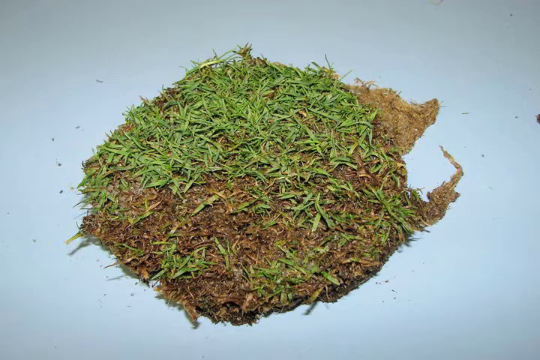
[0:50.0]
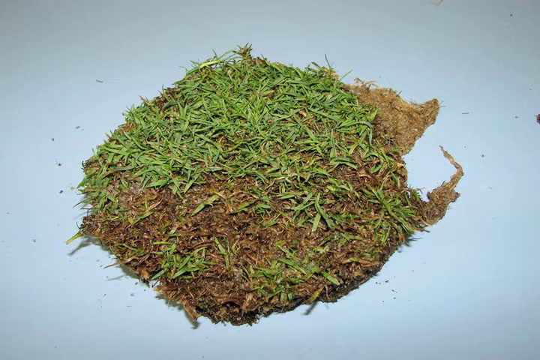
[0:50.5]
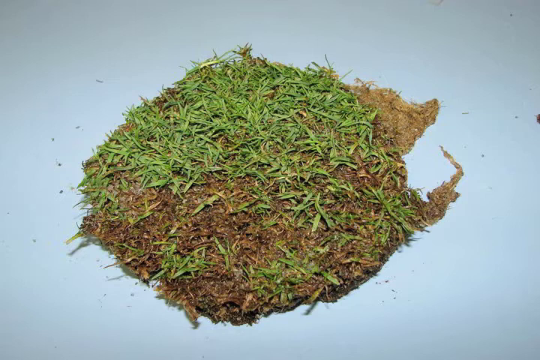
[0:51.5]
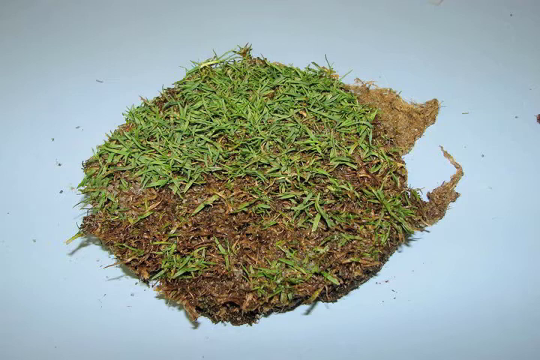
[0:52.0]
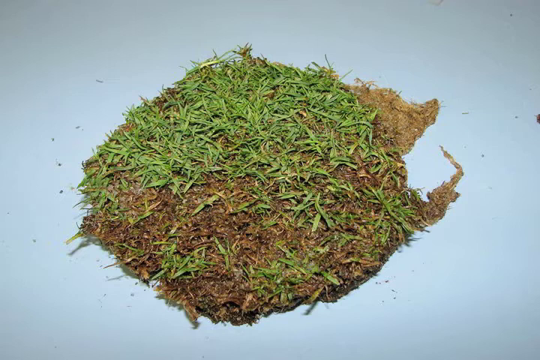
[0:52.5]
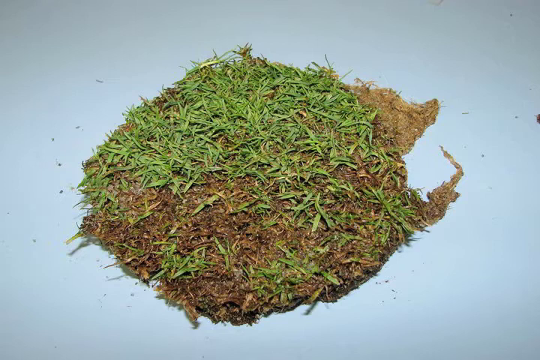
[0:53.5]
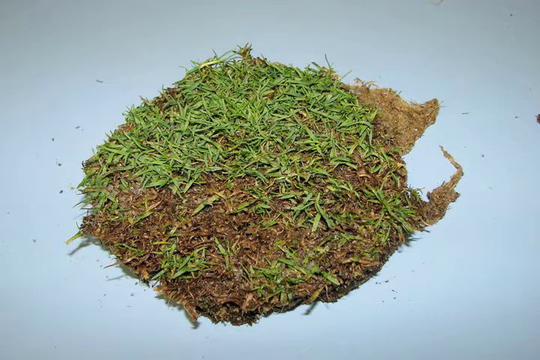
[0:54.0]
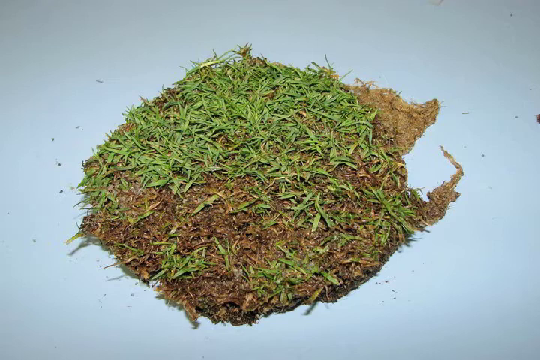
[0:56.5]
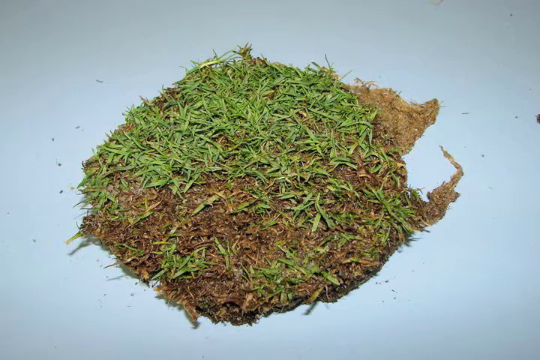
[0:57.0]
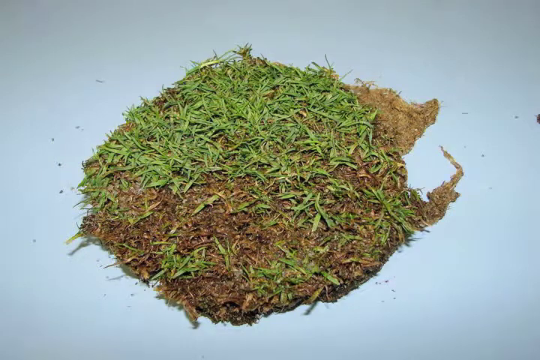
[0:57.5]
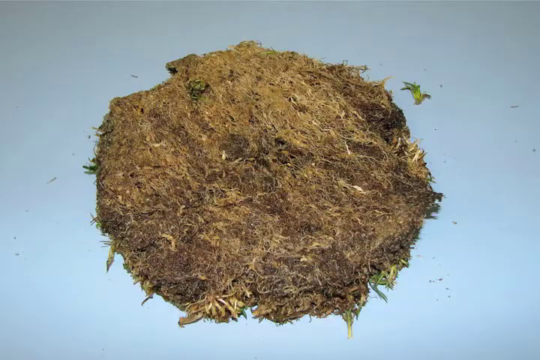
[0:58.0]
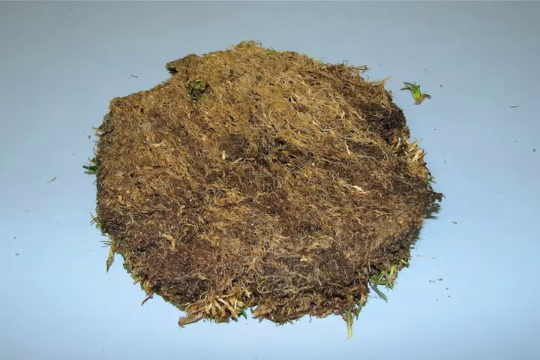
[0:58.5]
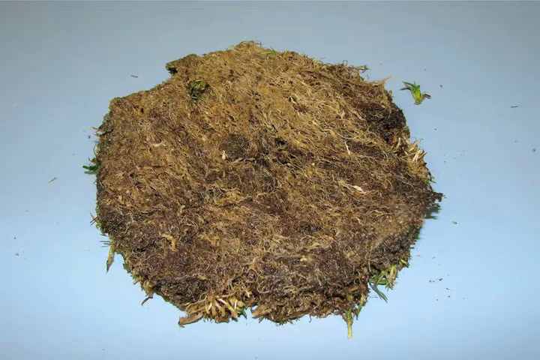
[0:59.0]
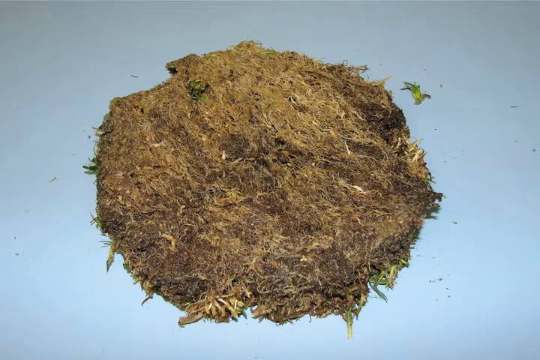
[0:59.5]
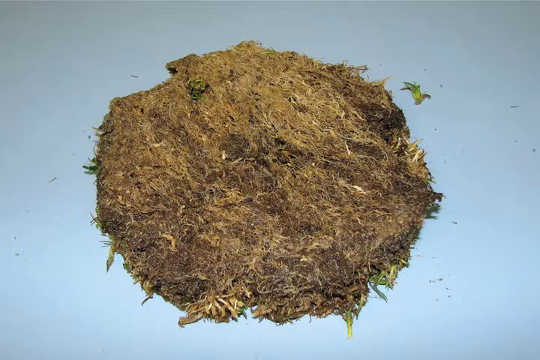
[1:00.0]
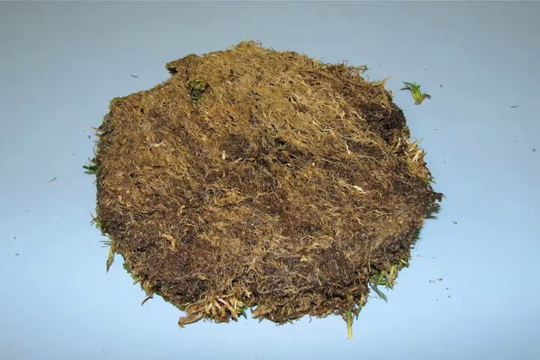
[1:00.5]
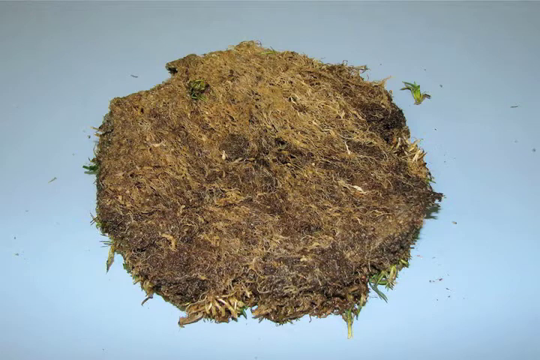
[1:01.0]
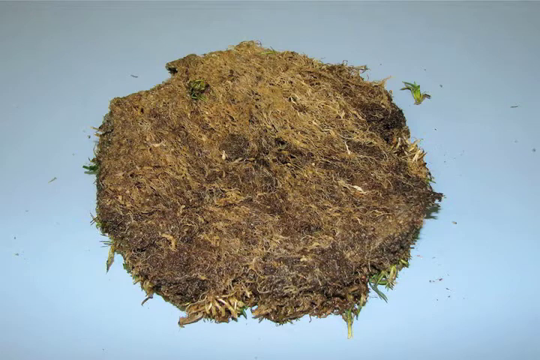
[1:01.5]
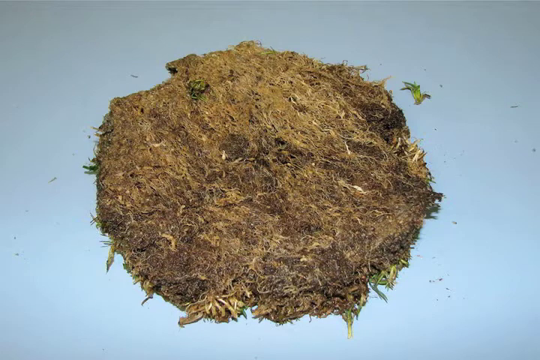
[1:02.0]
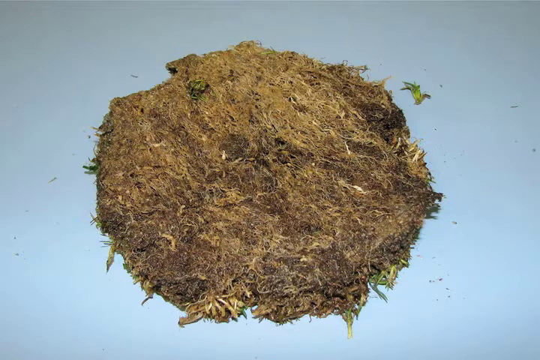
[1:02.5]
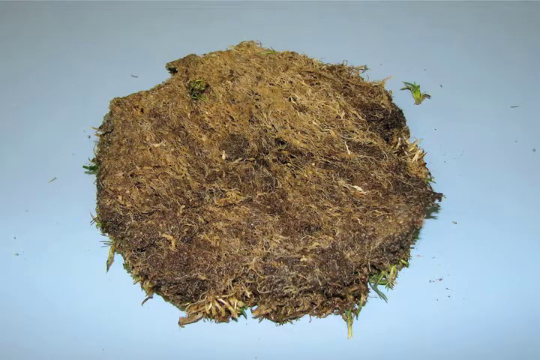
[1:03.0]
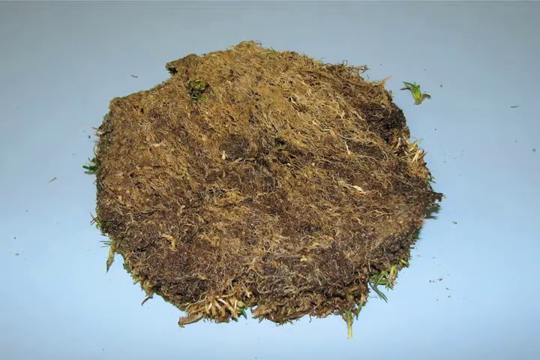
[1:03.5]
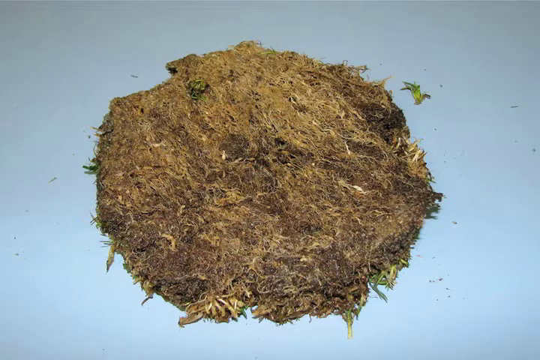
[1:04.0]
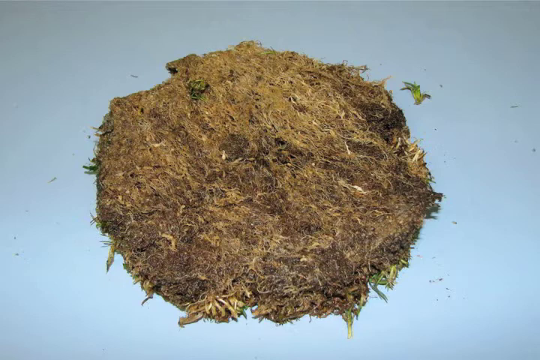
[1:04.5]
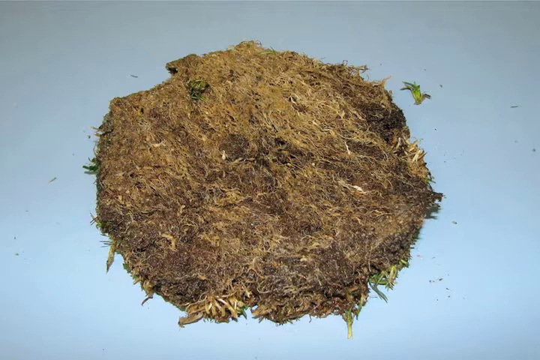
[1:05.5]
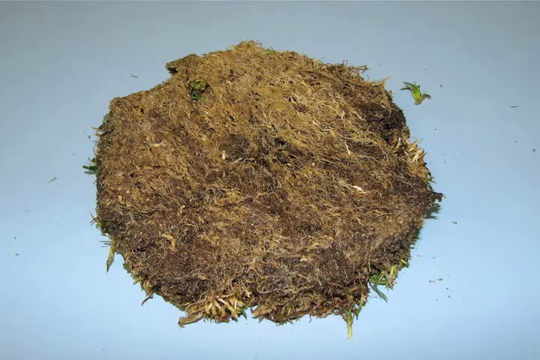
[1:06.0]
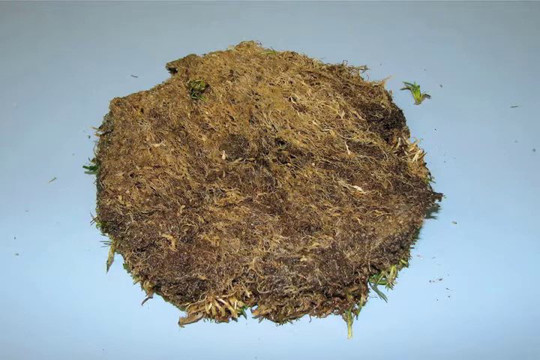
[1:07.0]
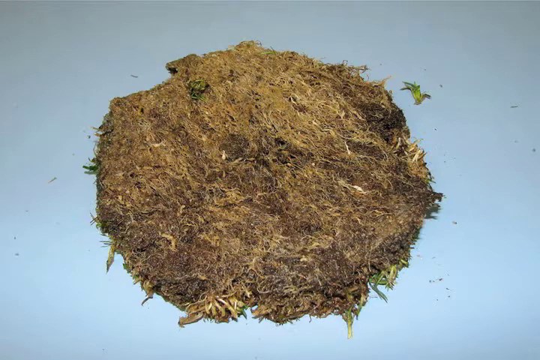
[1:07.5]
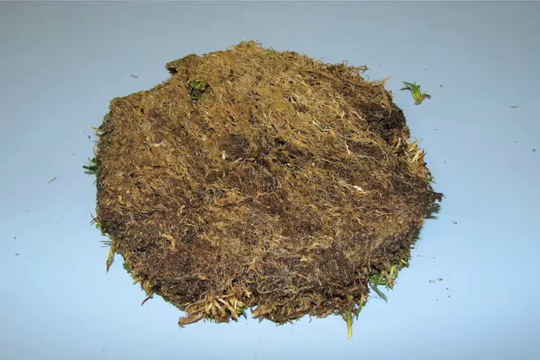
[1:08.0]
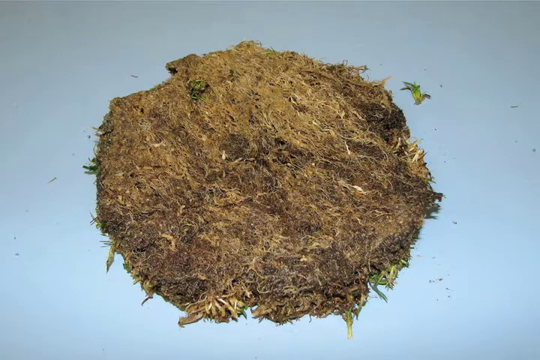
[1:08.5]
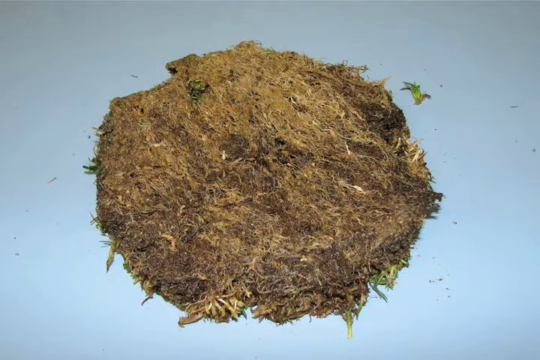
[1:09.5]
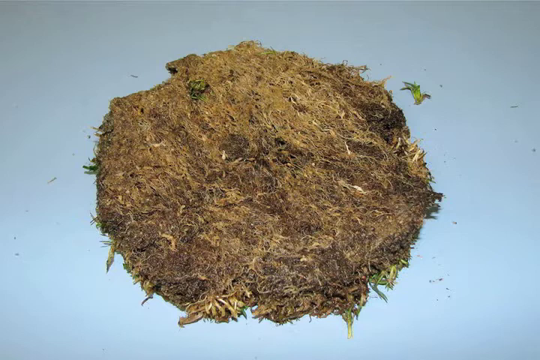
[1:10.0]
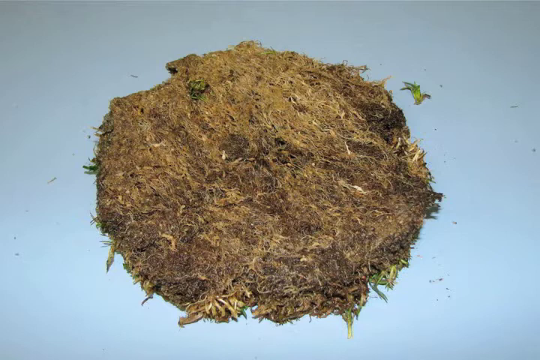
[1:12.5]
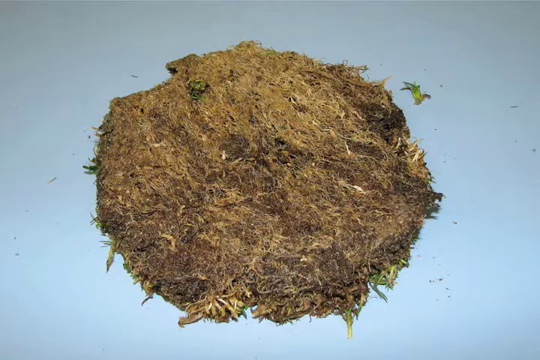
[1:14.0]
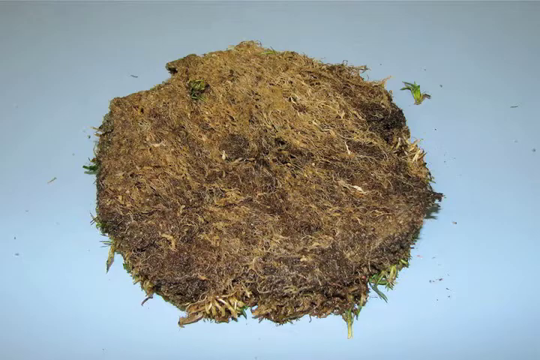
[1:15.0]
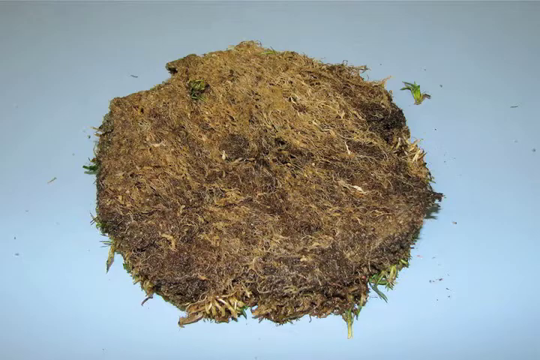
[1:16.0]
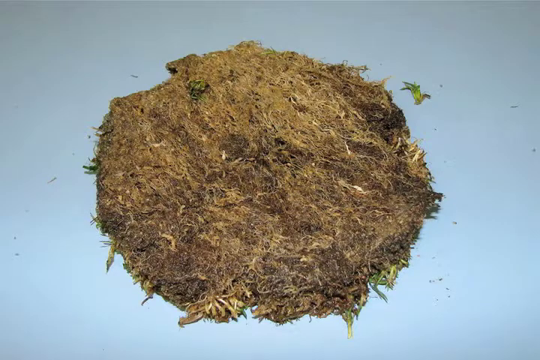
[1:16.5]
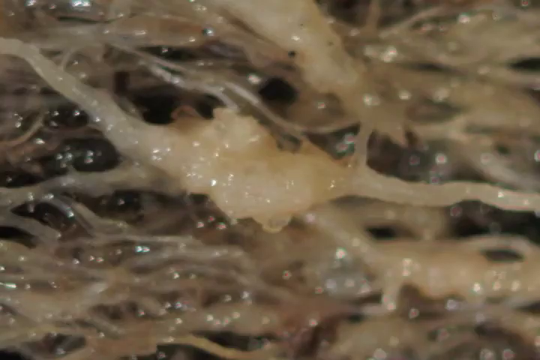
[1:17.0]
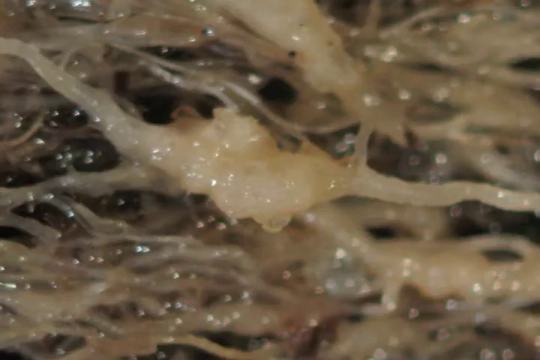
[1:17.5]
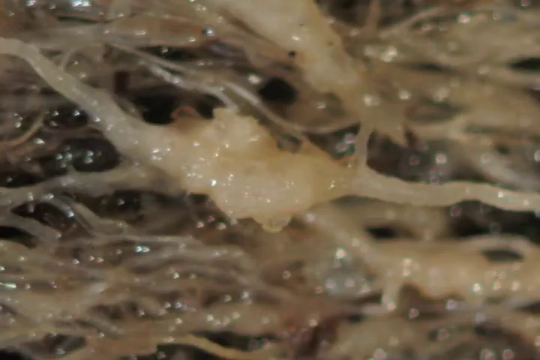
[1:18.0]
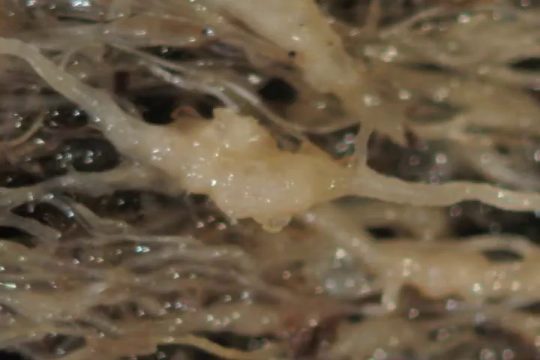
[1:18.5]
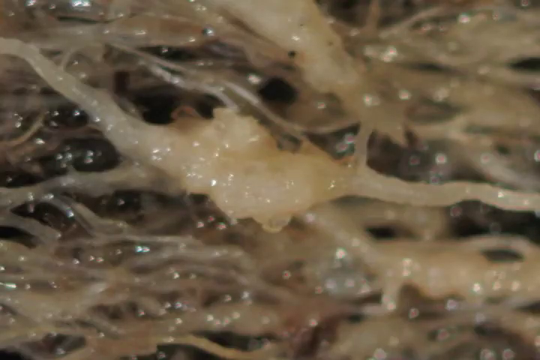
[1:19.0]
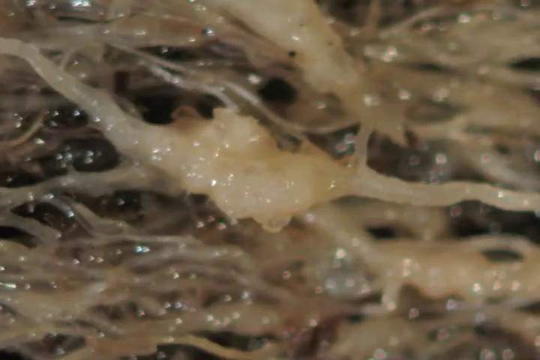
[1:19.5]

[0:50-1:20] A different patch of grass is shown, which seems to show its bottom; it is likely the previously shown patch flipped over. Larger roots come out of the bottom of the grass patch on the outside, and inside the patch the inner workings of the roots are visible. Some of the roots look darker and some are more defined by white lines. Some green grass is on the table surrounding the dirt patch, and some peeks out from the top, folded over slightly. The images then show what seems to be a close-up view of the small roots of the plant. They look white, gelatinous and shiny. They overlap each other greatly, and some are thicker in the center than others. It seems that the thinner the root is, the more translucent it appears.